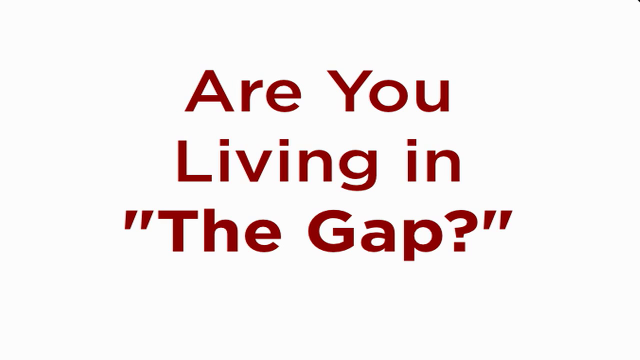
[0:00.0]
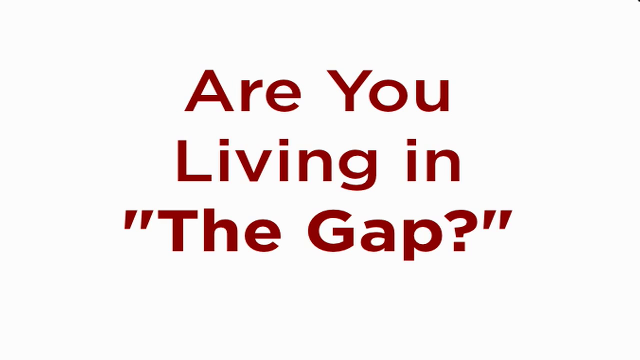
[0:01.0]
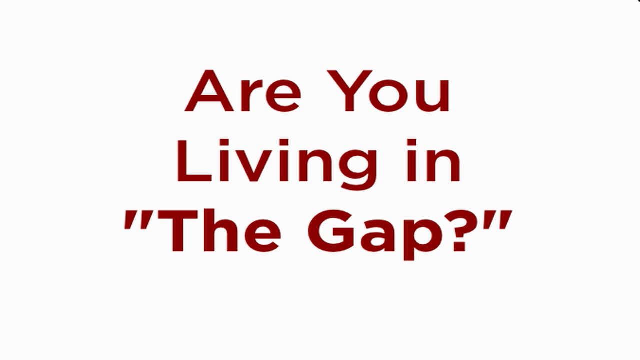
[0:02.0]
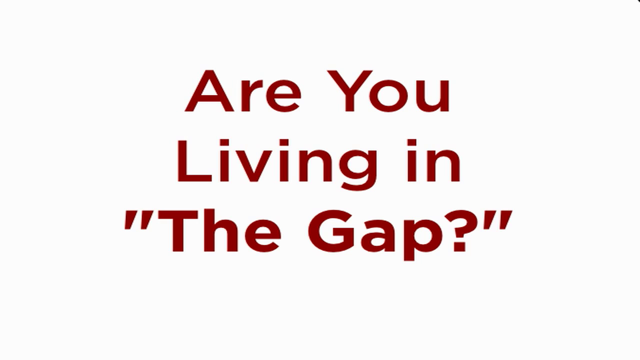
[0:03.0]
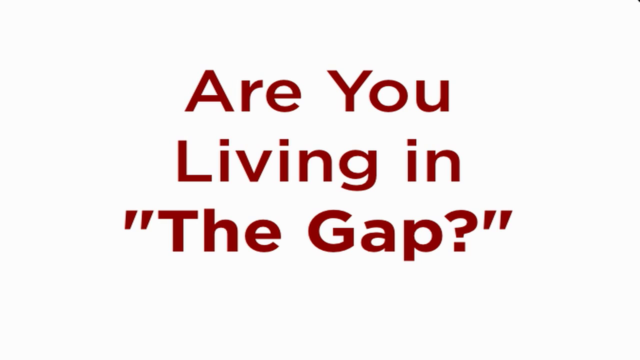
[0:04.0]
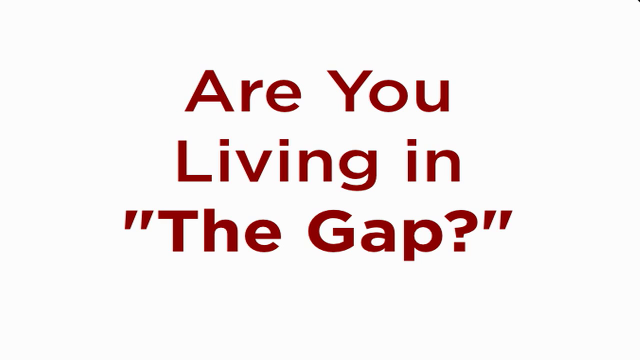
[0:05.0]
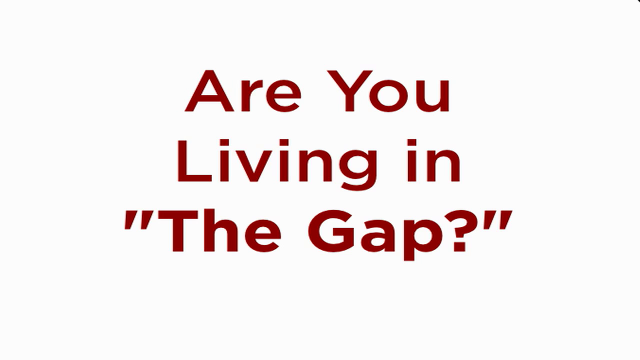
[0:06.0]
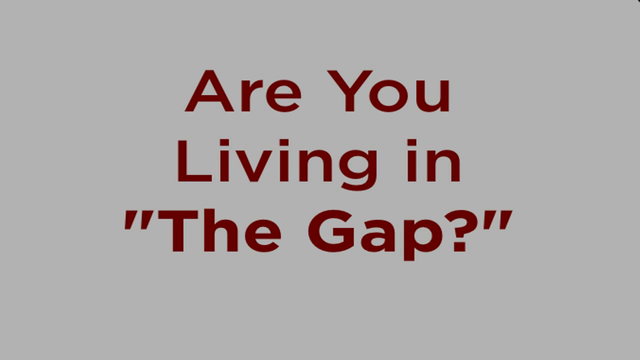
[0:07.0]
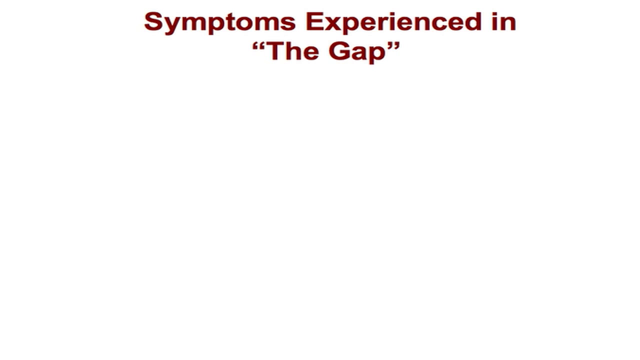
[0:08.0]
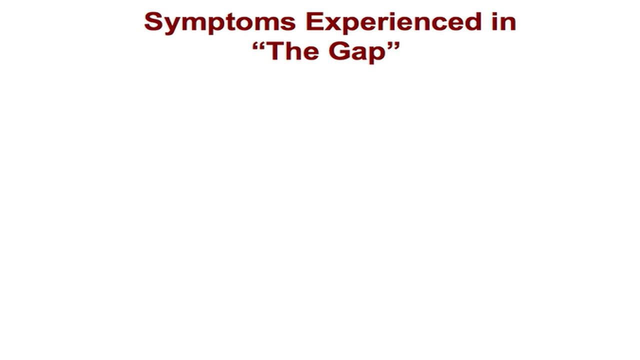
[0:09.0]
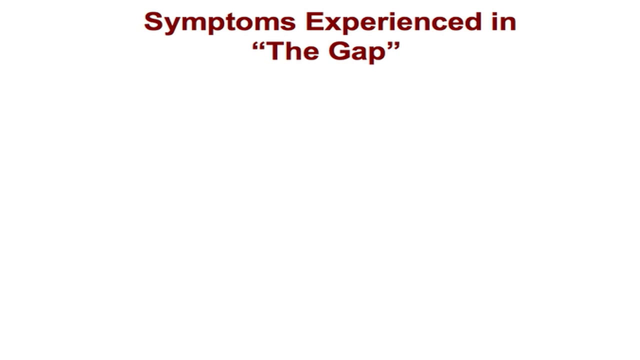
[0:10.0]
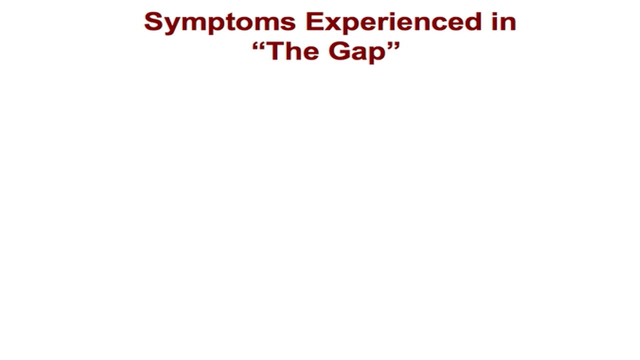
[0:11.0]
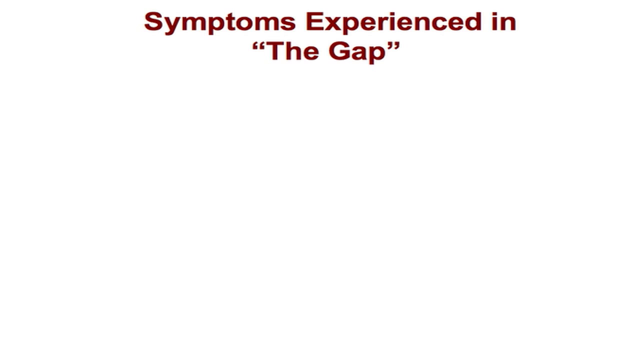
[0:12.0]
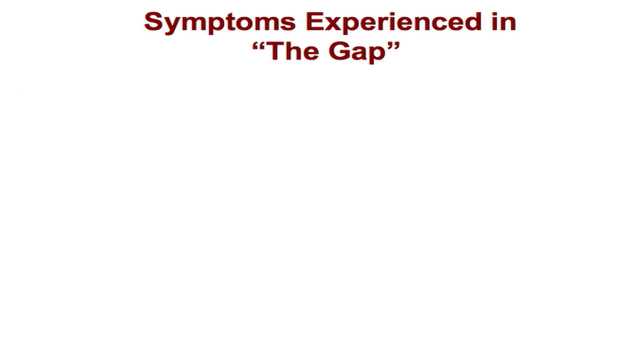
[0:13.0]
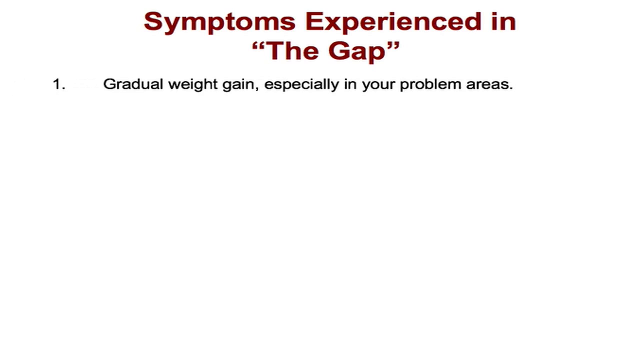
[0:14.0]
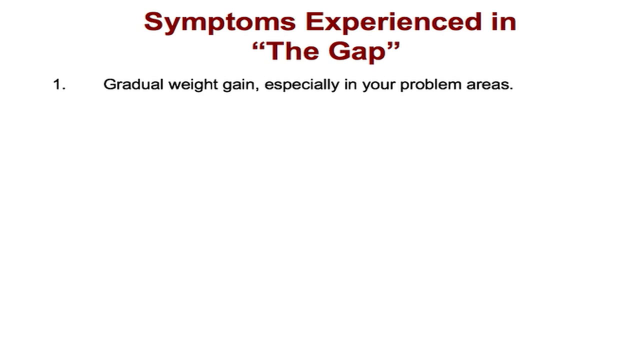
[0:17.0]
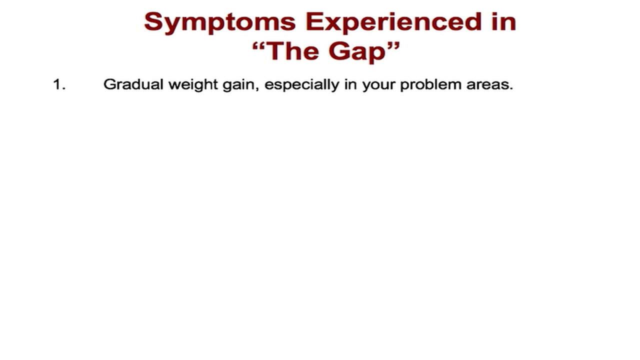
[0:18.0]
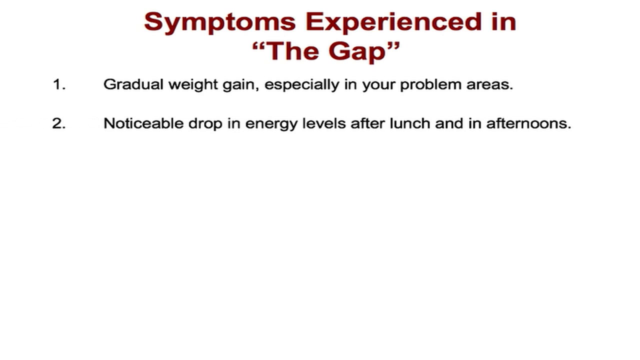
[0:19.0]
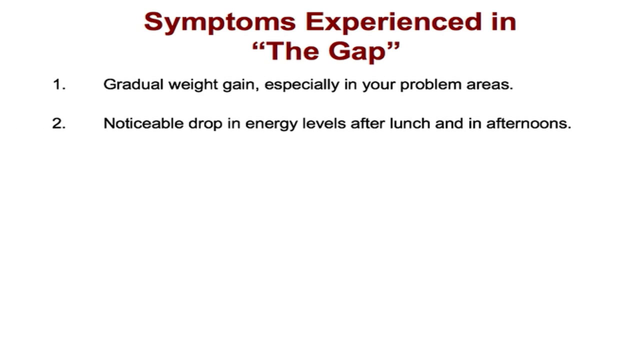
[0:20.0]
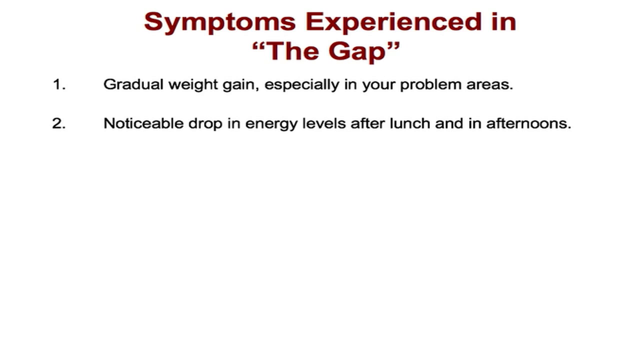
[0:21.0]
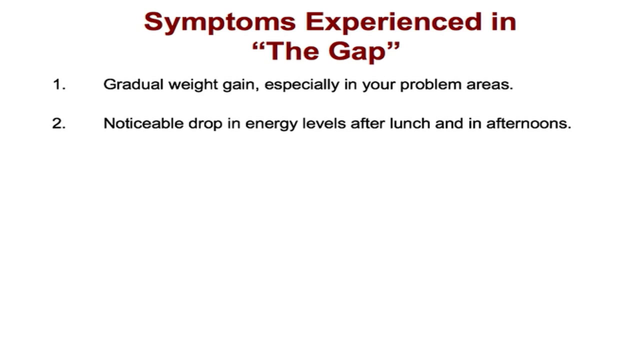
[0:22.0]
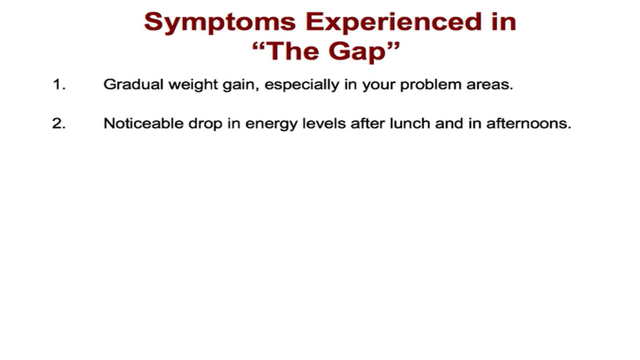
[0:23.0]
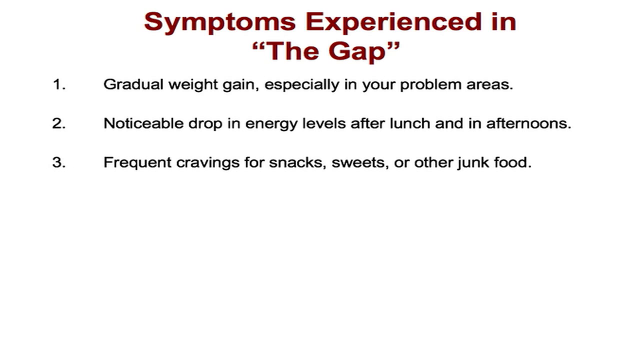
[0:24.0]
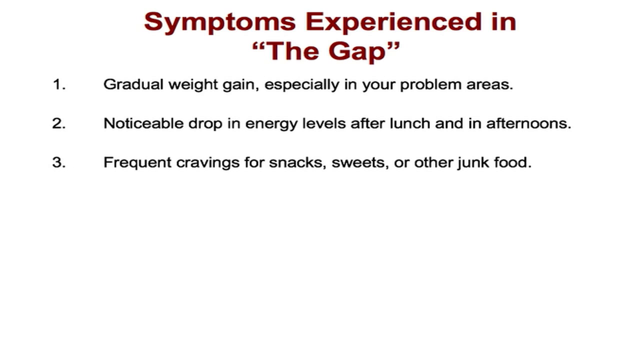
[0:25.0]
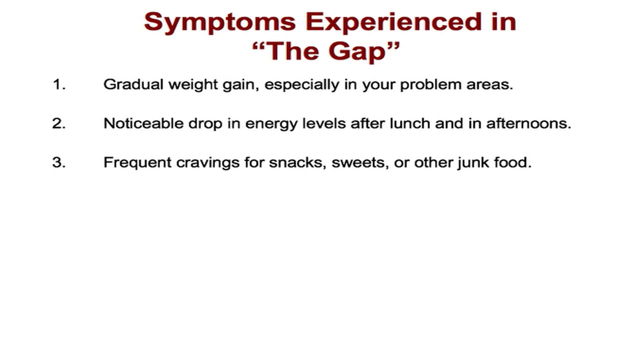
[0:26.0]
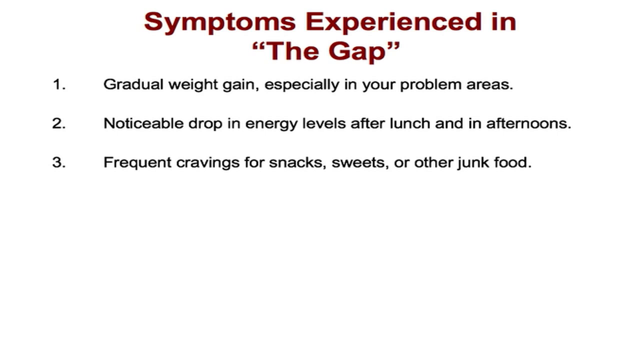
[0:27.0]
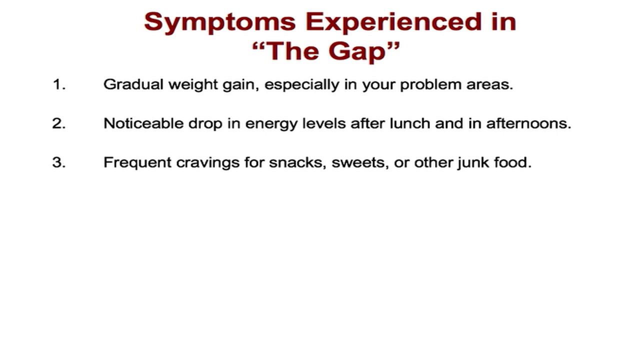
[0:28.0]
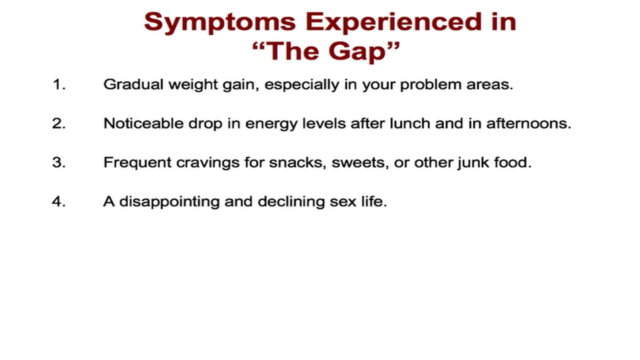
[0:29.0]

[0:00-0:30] Text on screen lists "symptoms experienced in the gap", including "gradual weight gain, especially in your problem areas", "noticeable drop in energy levels after lunch and in the afternoons", and "frequent cravings for snacks, sweets, or other junk foods", followed by a line beginning "Disappointed".